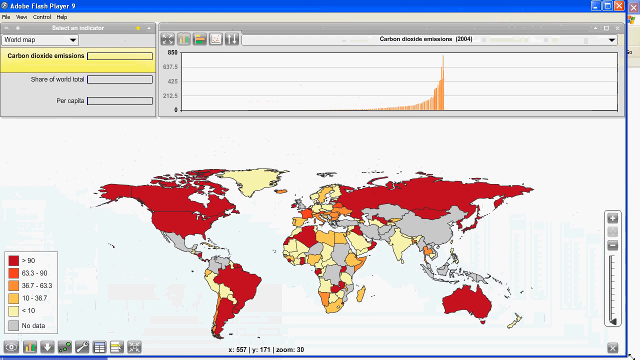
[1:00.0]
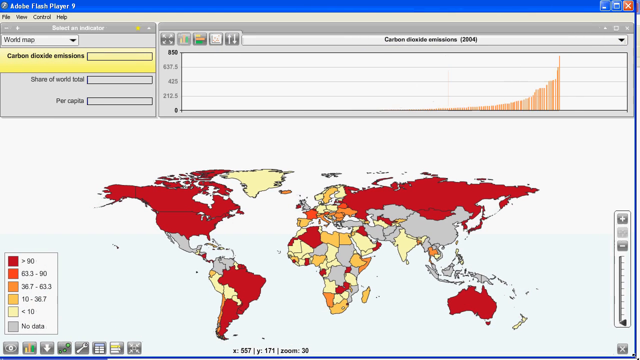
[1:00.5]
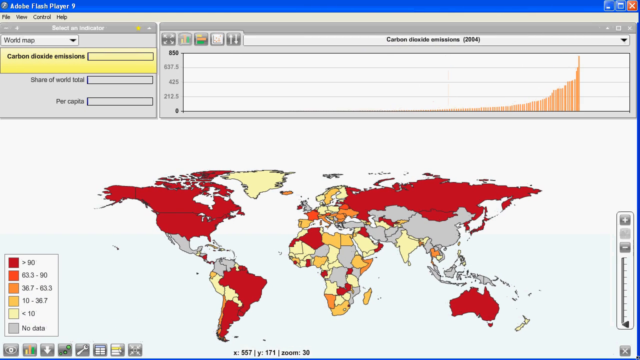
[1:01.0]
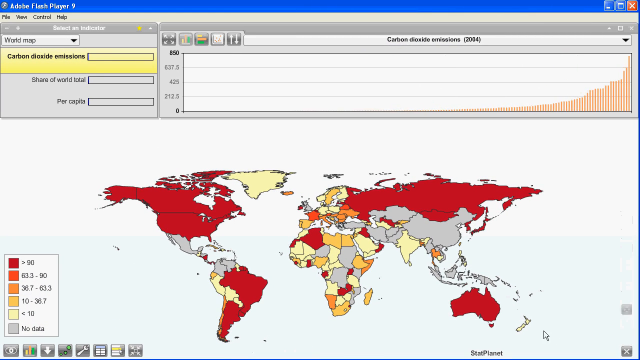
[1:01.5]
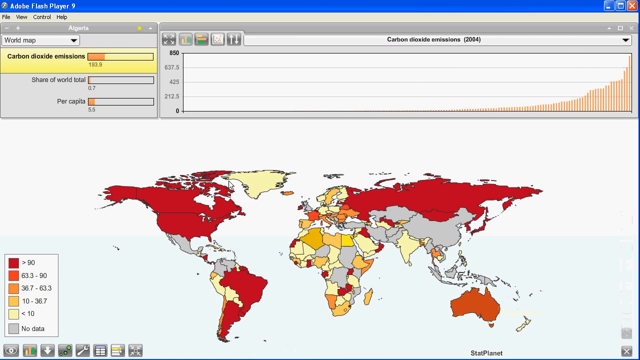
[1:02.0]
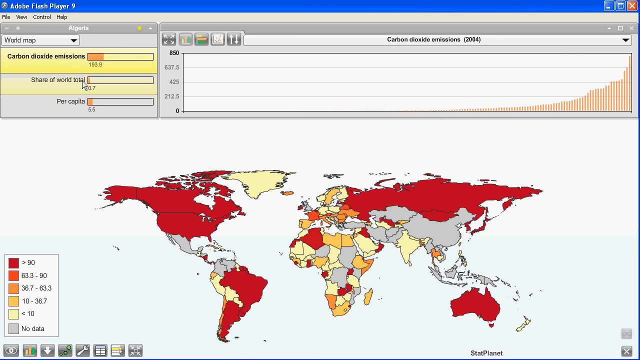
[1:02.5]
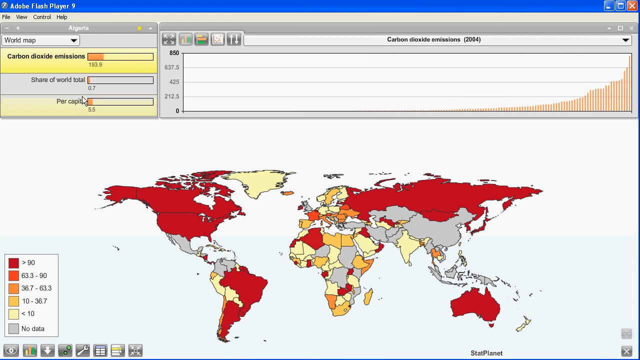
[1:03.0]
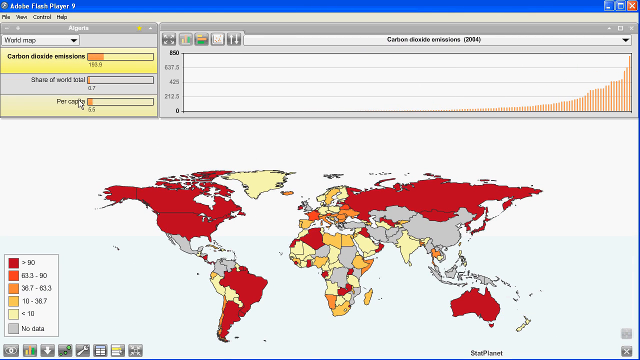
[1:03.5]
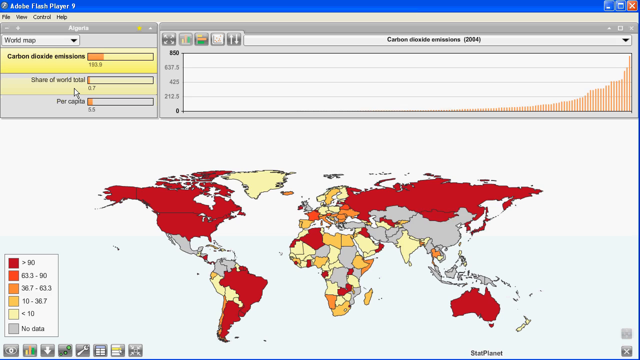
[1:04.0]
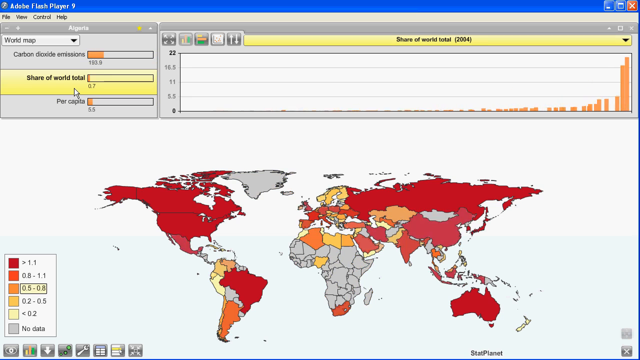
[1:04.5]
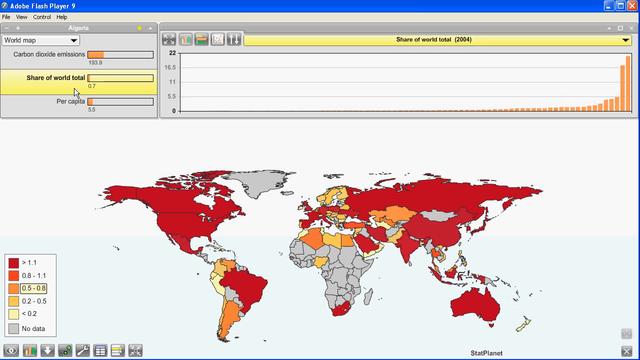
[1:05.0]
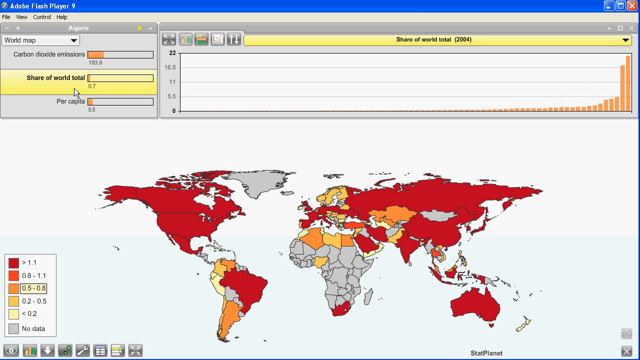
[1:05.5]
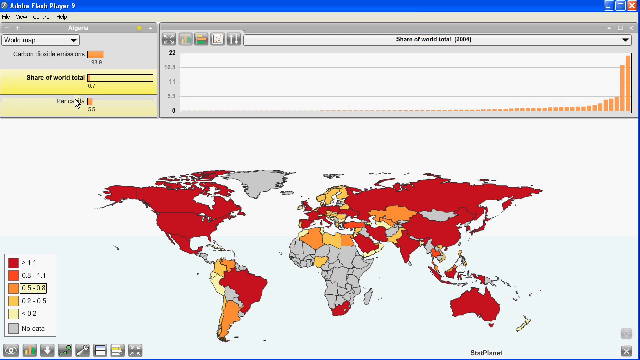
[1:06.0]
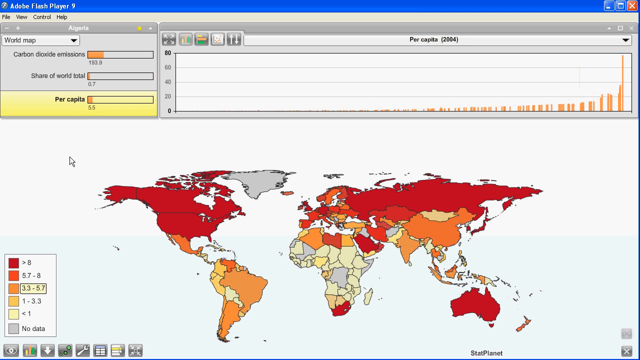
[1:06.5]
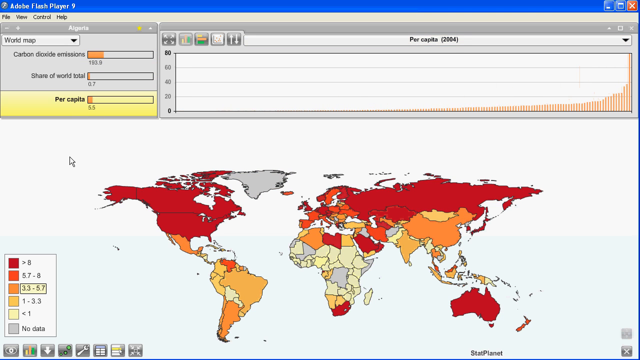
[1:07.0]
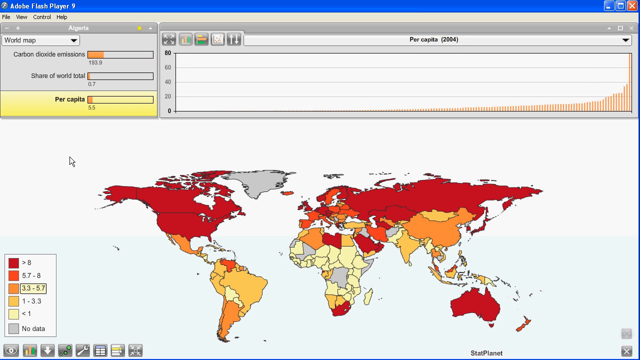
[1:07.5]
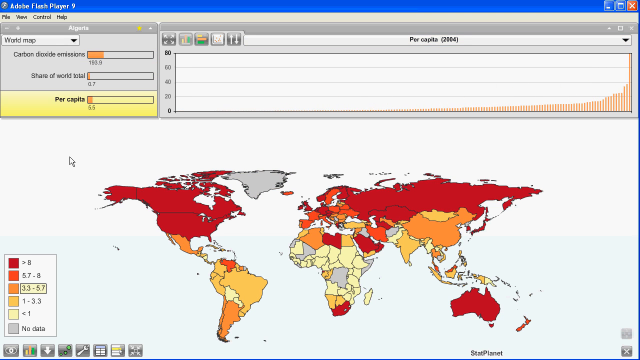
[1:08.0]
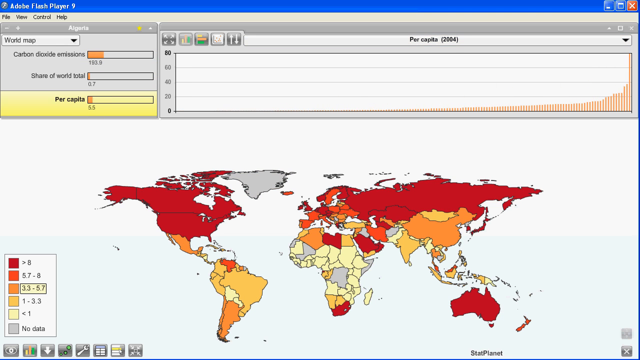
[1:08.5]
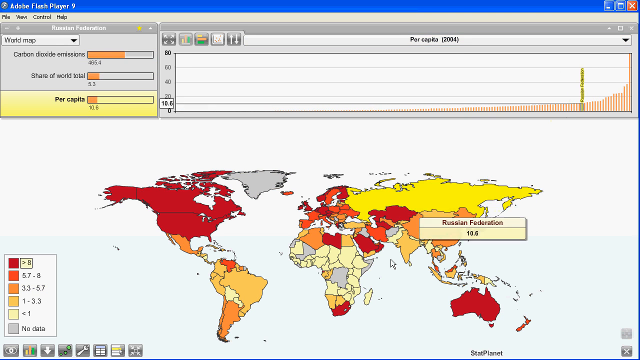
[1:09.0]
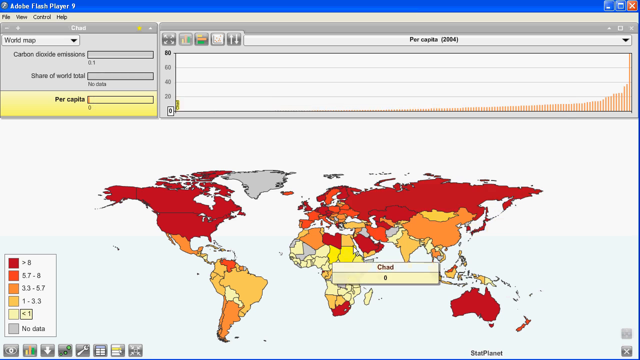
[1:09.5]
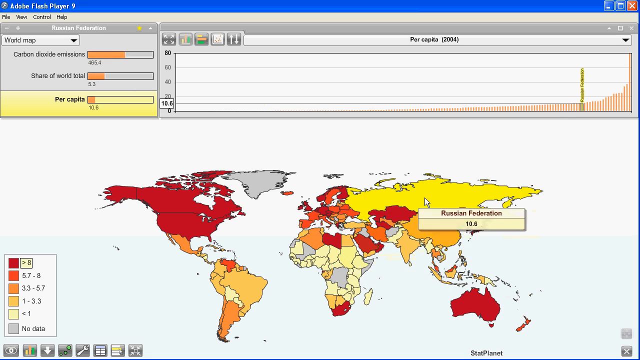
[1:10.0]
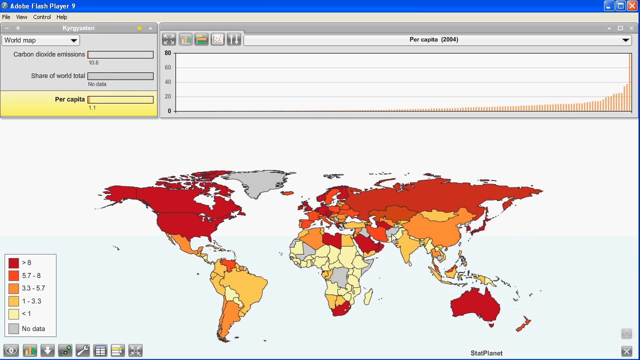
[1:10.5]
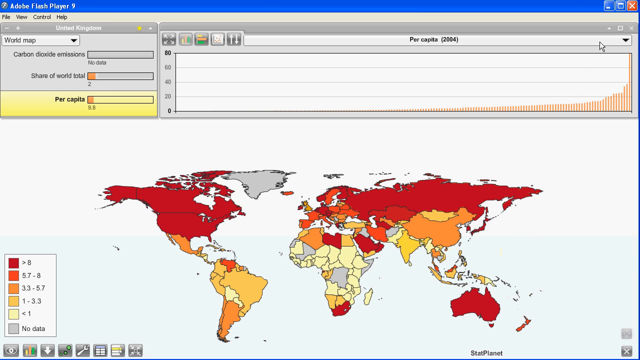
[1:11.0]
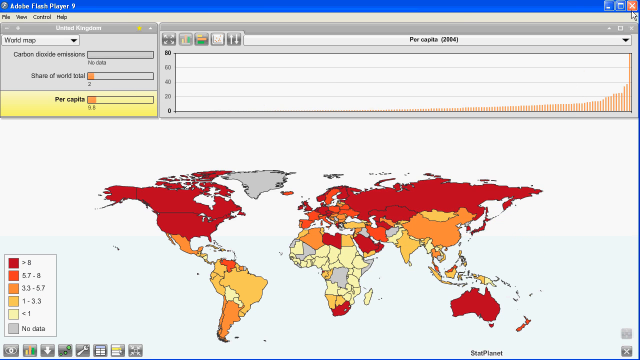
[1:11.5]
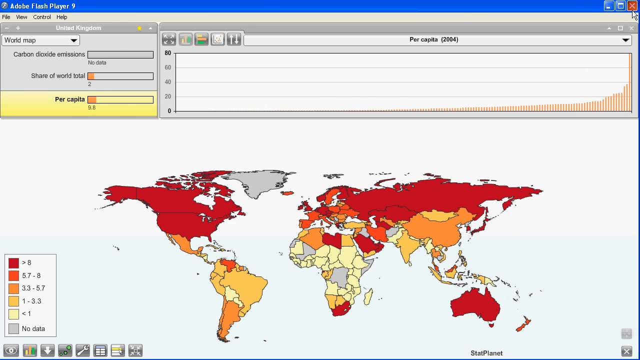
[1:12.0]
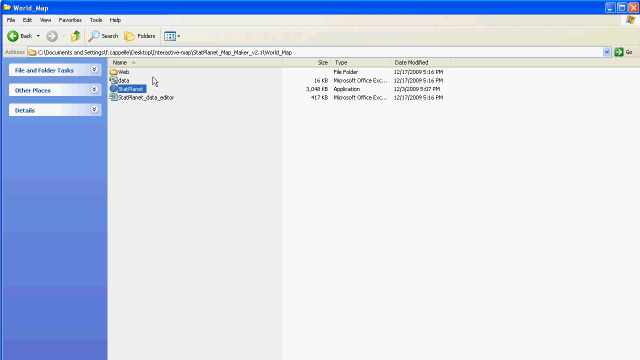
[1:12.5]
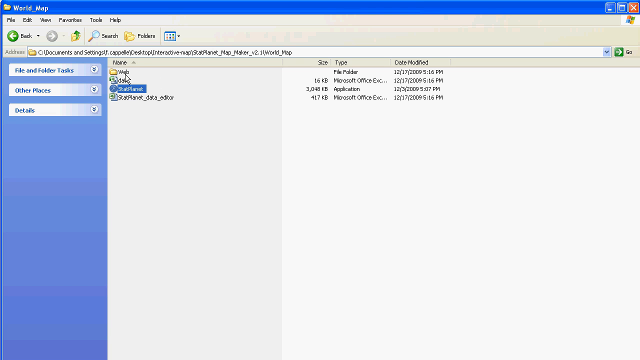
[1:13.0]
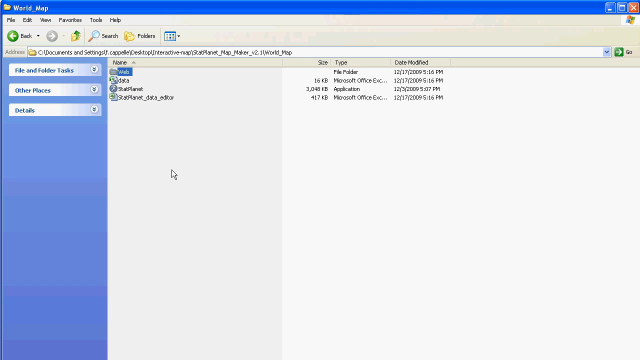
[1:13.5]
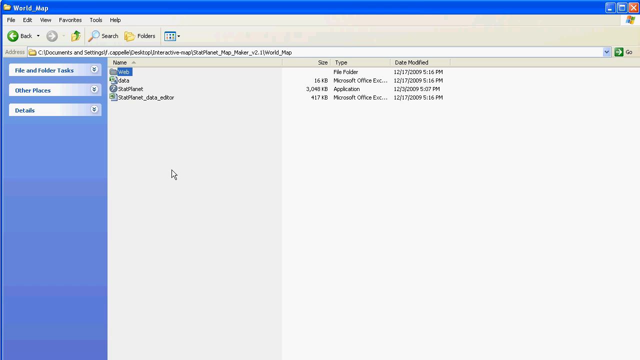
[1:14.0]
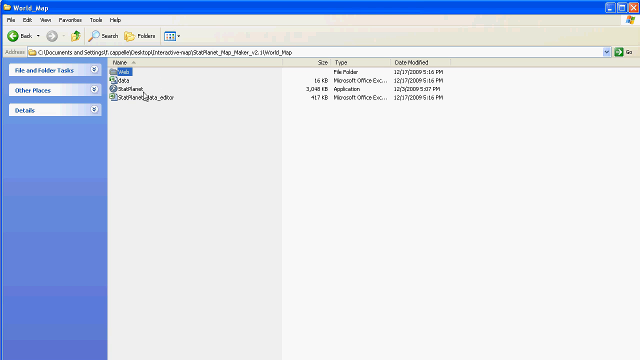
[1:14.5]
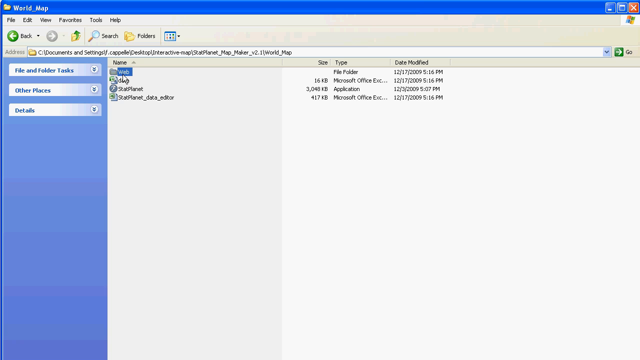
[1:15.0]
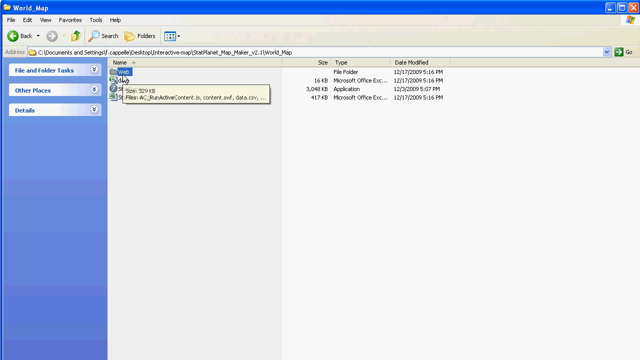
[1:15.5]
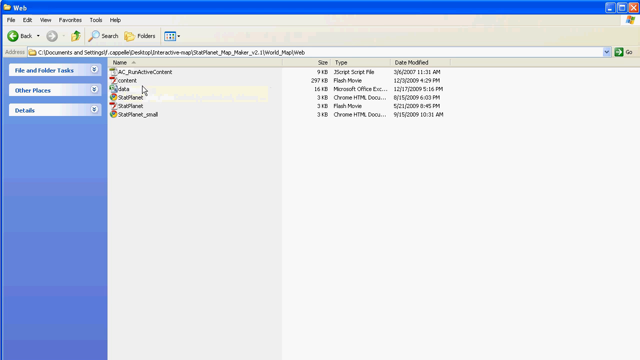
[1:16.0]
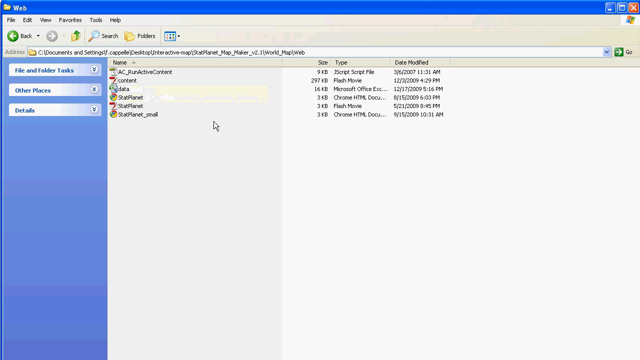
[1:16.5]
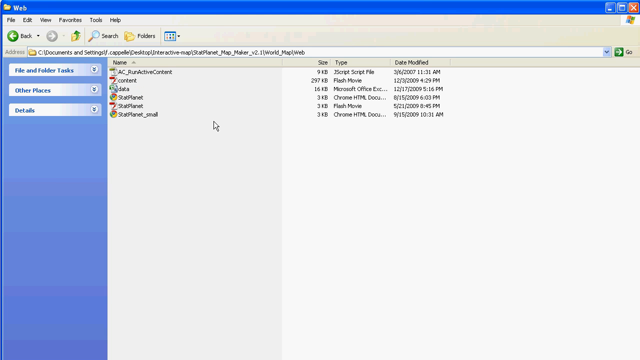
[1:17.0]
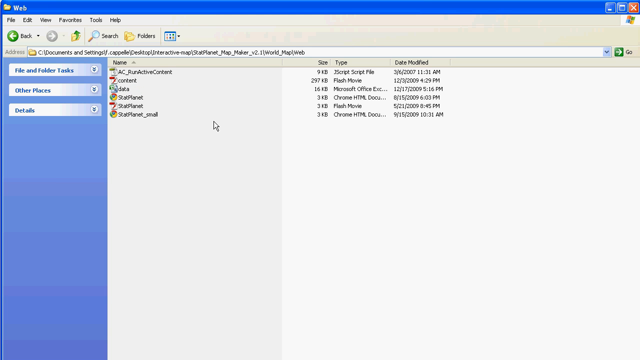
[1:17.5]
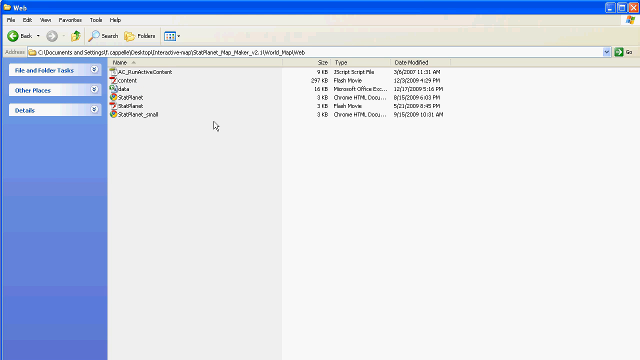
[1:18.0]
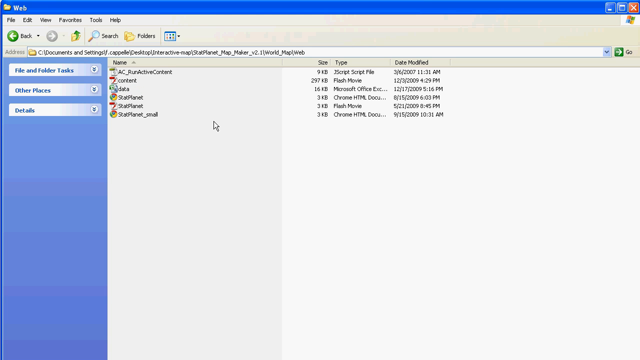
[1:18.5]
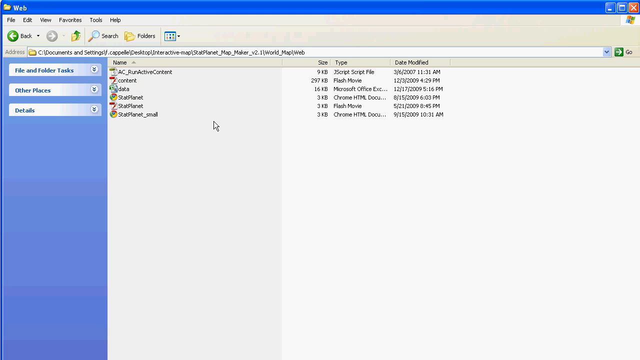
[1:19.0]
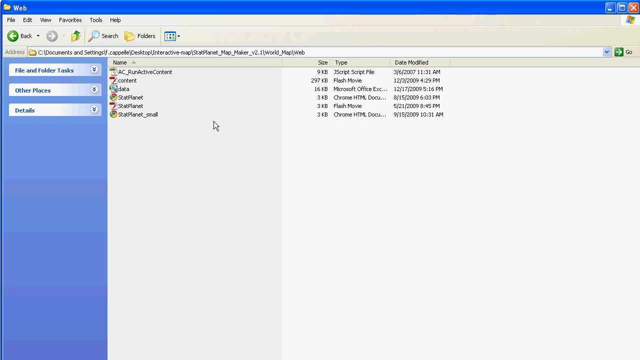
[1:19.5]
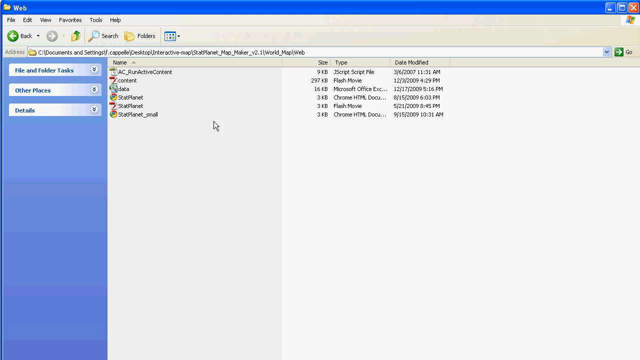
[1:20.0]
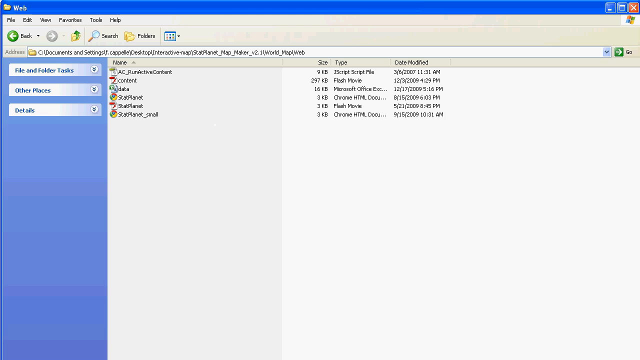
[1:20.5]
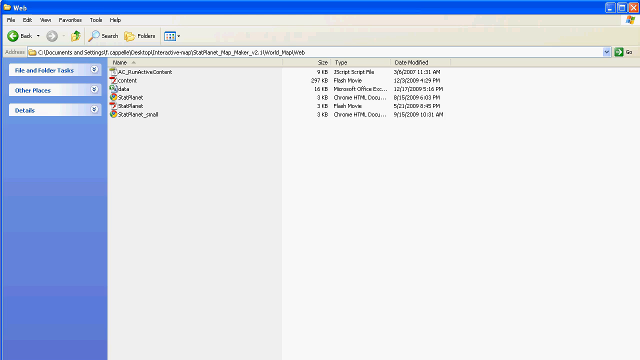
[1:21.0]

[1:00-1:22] The geographical map is shown with a bar graph above it that shows a significant peak of something at some point in time. All of the United States, Canada and apparently part of Alaska are completely red, along with a lot of the Russian sector, part of Africa and some parts of Asia; South America is mostly red, while Mexico is untouched. The view zooms in and the display changes, apparently to show different time frames. Areas of the planet are highlighted, with less shown in gray and more in red.